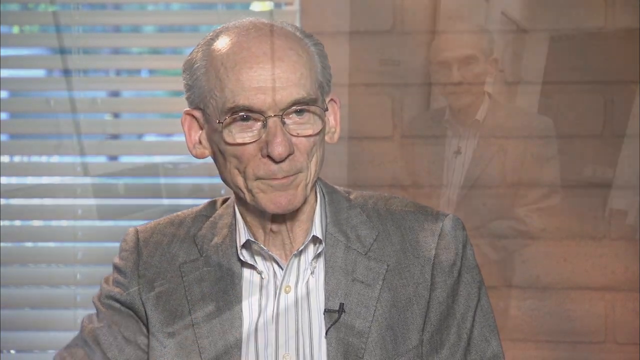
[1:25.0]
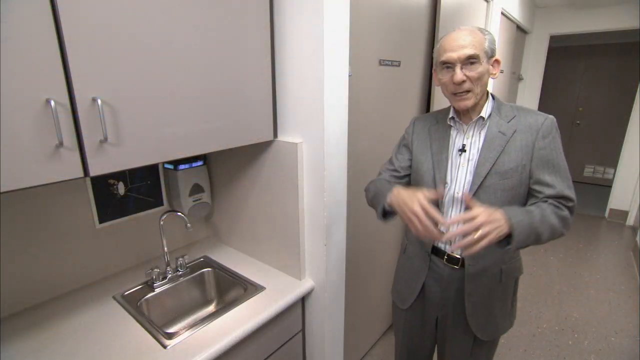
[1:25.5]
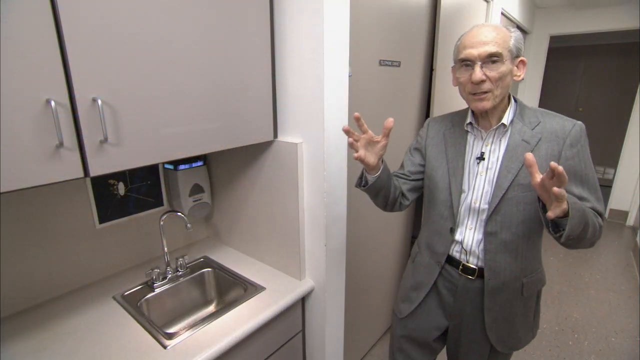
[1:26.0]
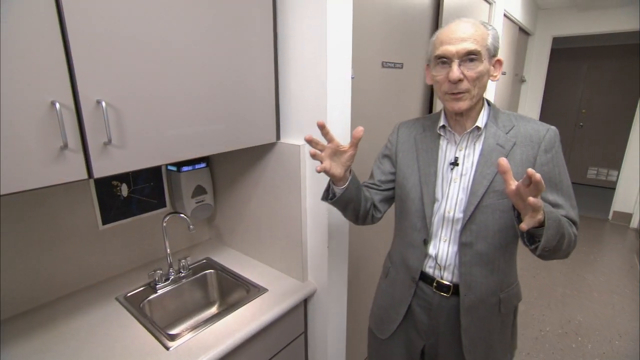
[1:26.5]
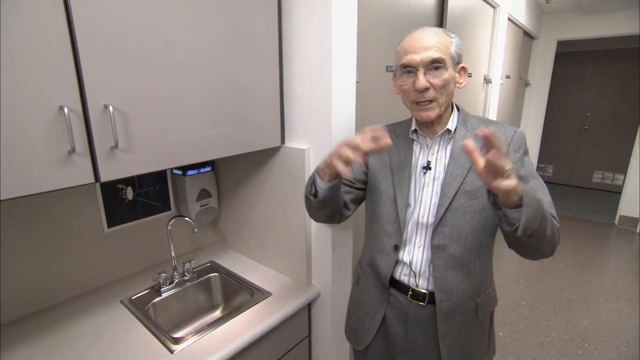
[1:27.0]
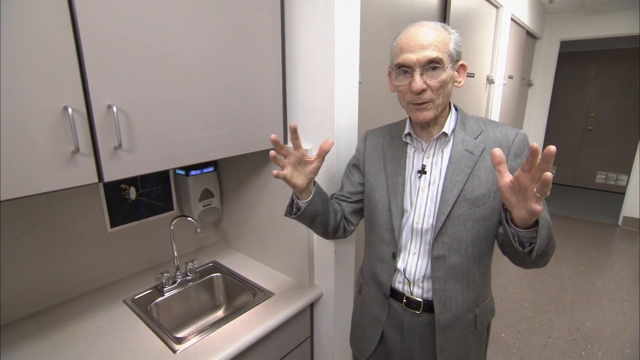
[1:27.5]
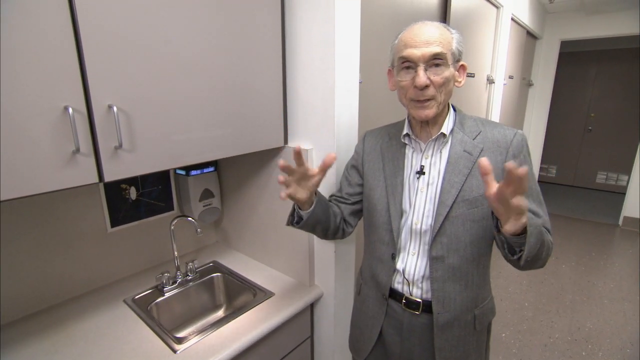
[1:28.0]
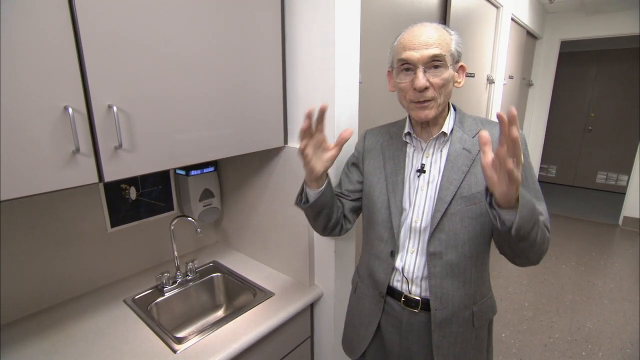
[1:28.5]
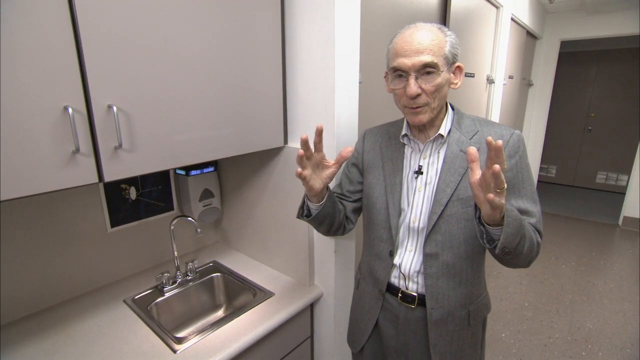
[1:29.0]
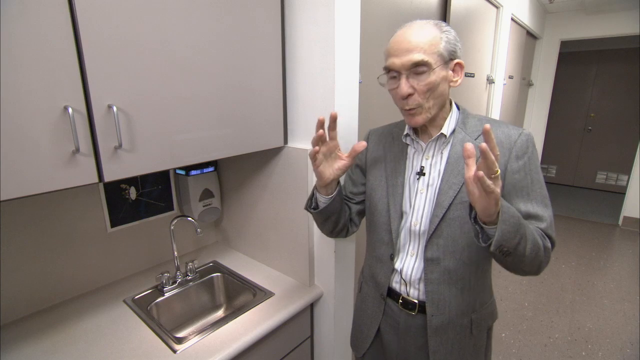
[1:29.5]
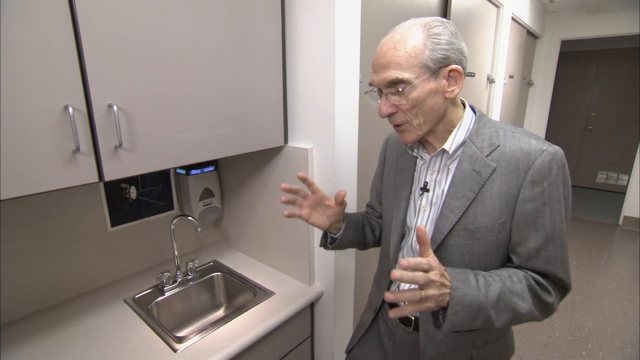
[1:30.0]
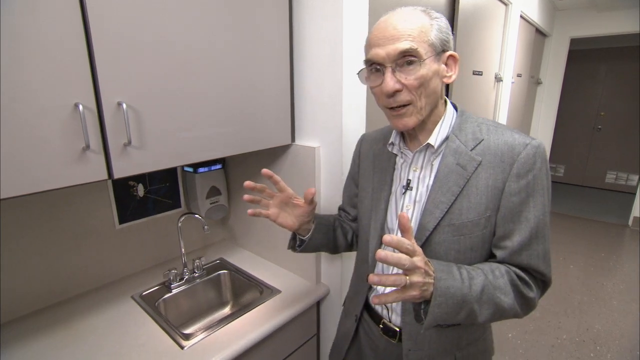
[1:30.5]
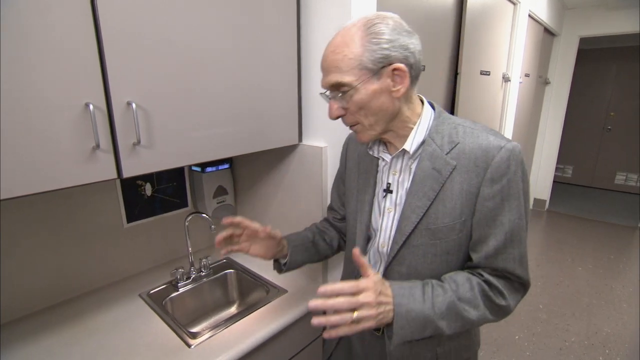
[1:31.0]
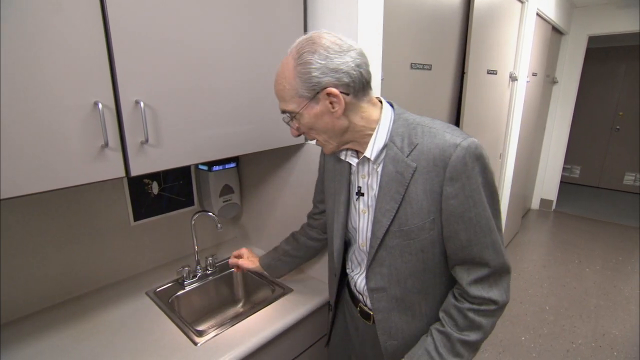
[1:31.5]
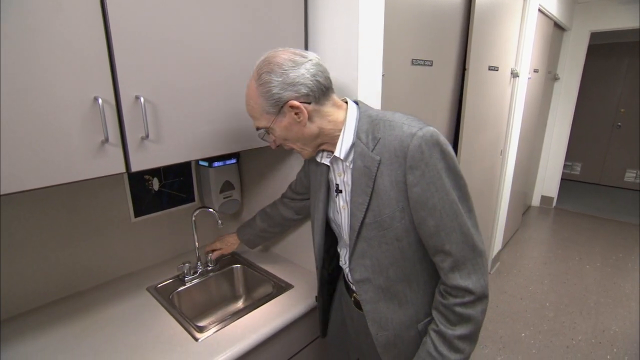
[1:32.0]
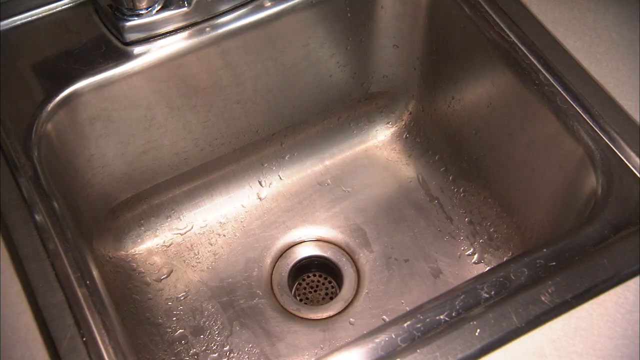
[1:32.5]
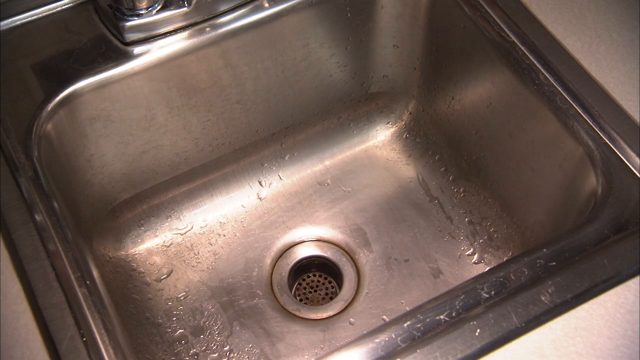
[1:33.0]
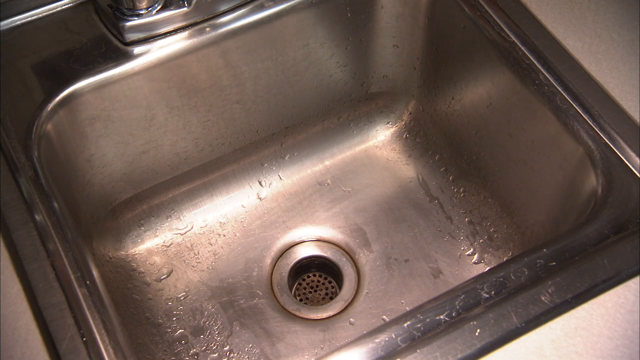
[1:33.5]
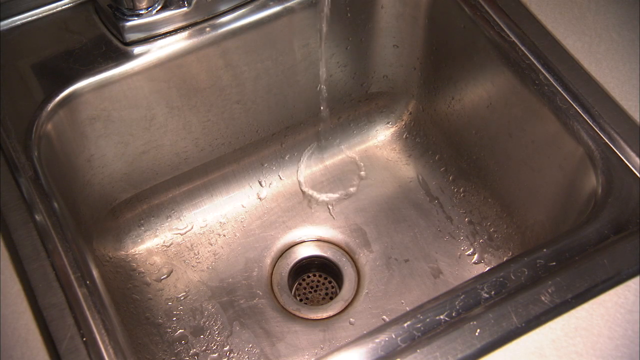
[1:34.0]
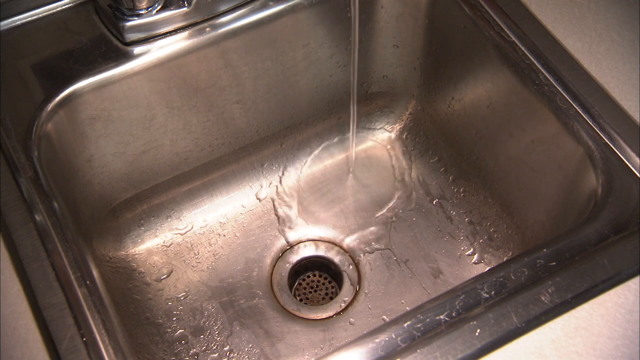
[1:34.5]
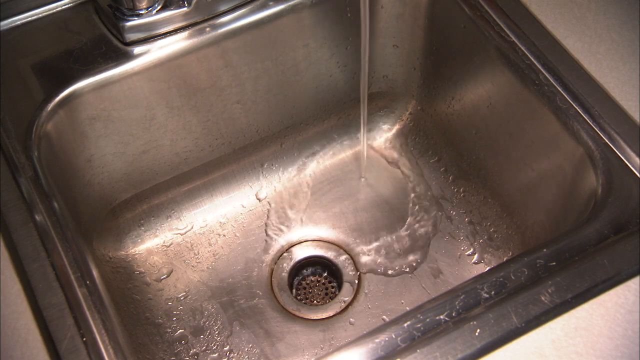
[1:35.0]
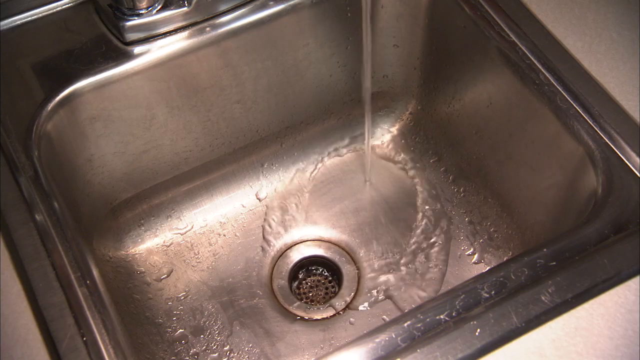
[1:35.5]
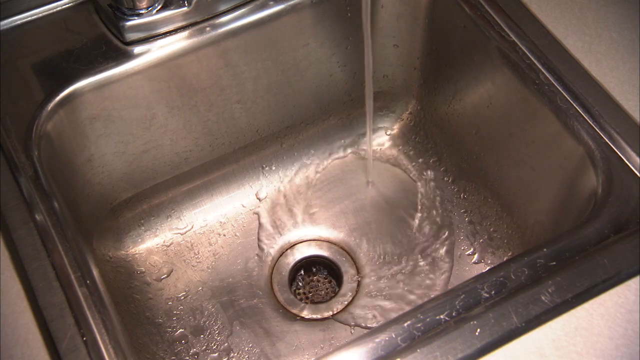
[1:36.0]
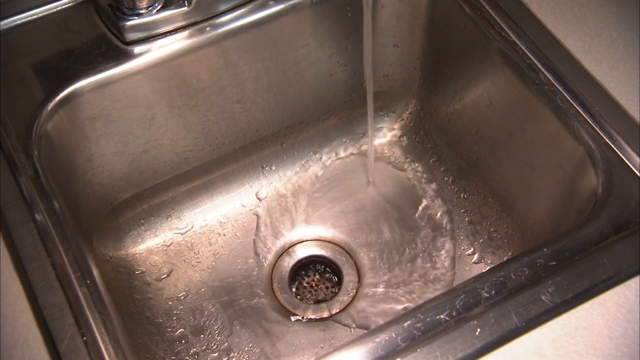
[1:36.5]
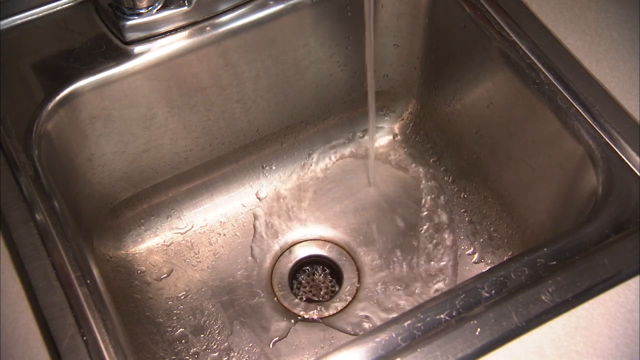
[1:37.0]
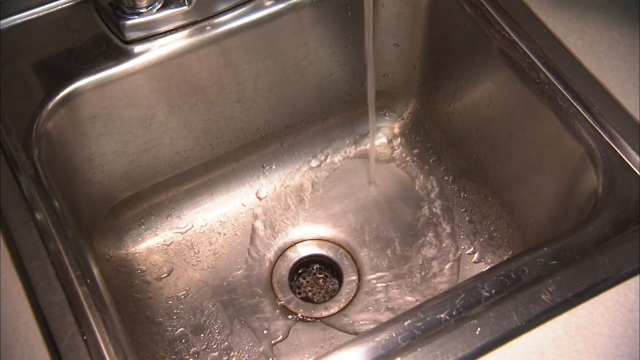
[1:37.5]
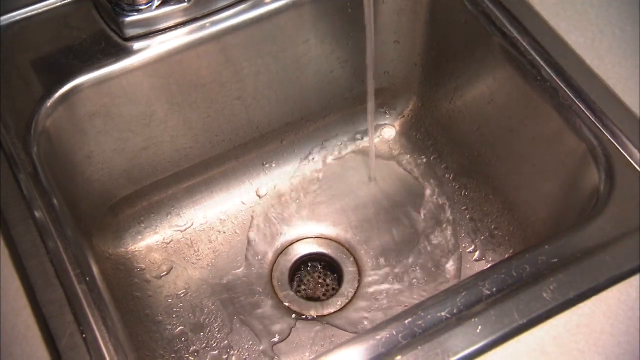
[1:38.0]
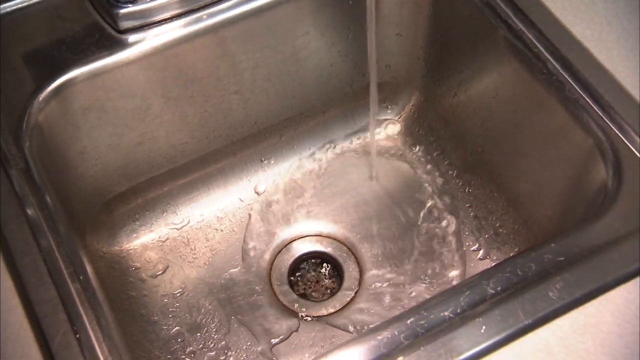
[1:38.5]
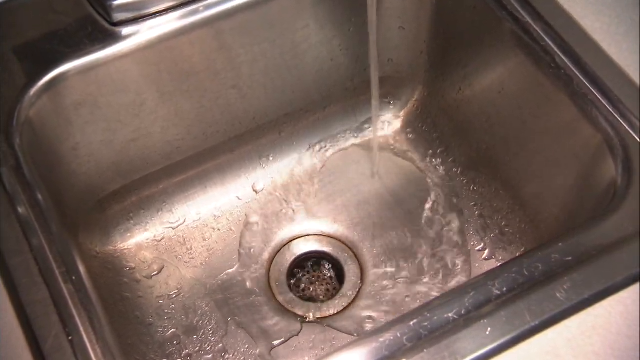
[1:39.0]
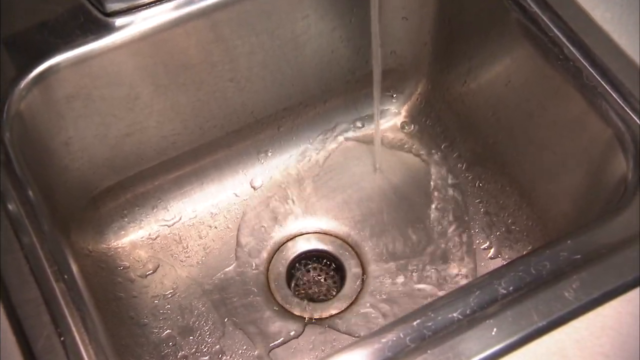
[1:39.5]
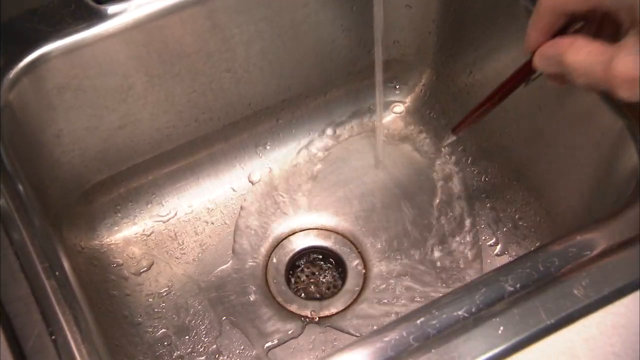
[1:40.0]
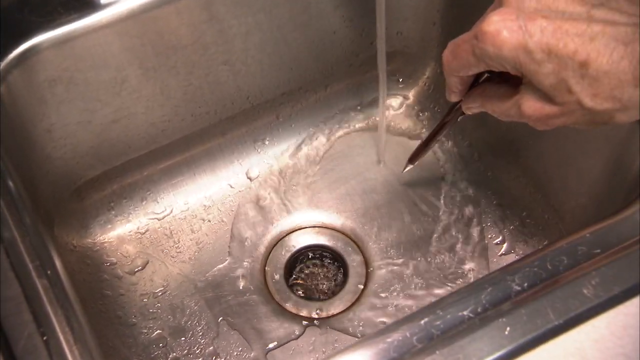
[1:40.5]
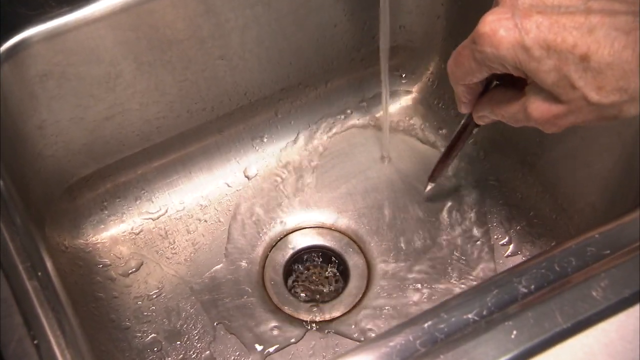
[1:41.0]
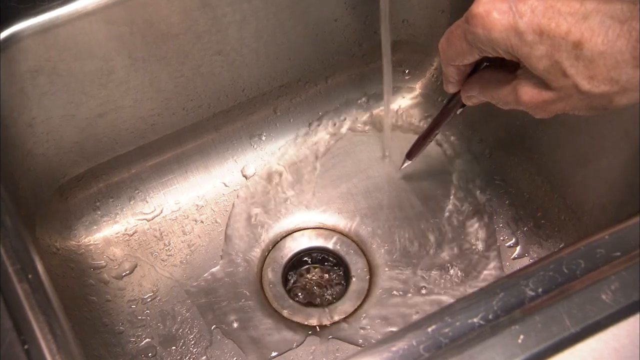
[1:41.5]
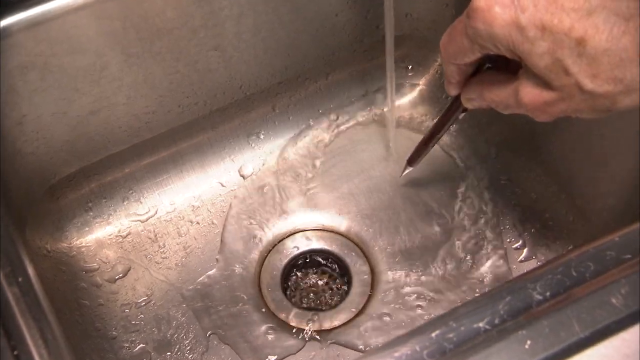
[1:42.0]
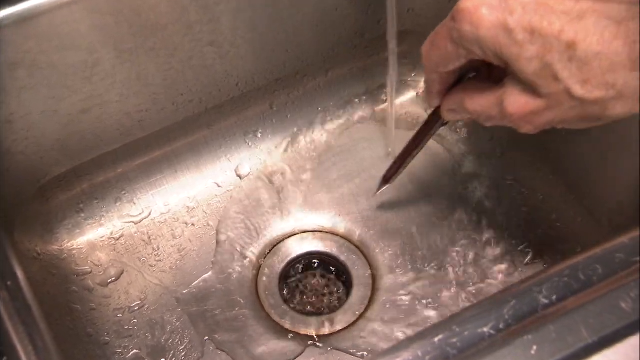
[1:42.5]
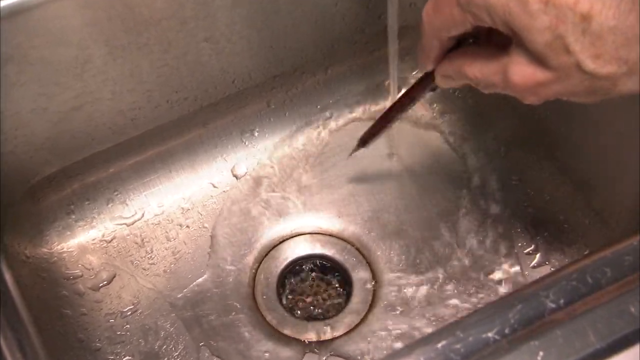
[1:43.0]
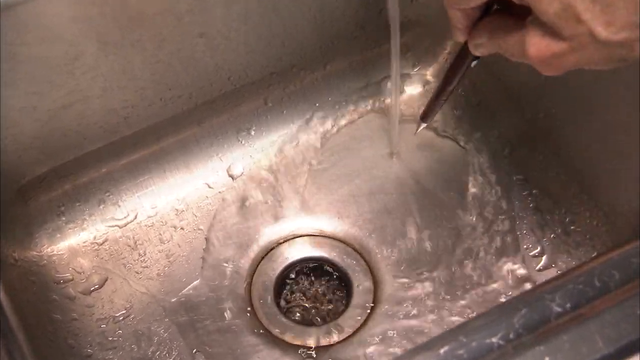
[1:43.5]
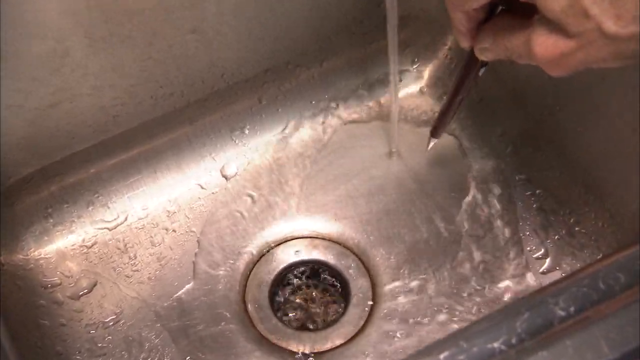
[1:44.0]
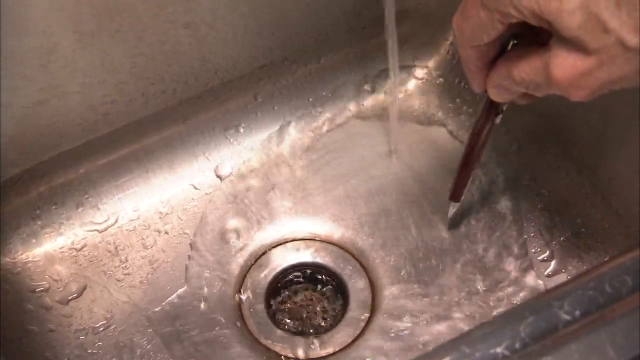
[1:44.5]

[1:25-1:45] A man talks in front of a stainless steel sink. He turns the right faucet and water runs, and he points at the water with a brown pen. Next to the sink is a gray soap dispenser. Above the soap dispenser and the sink is a cabinet with two doors and silver handles. In the background are multiple gray doors that look like they slide horizontally rather than swing open like a traditional door. The floor is a darker gray that looks like it has natural specks like natural stone.